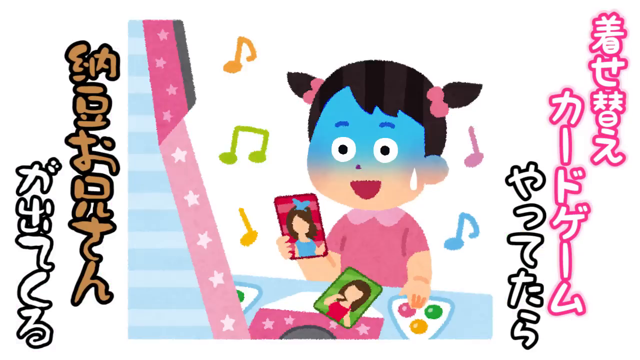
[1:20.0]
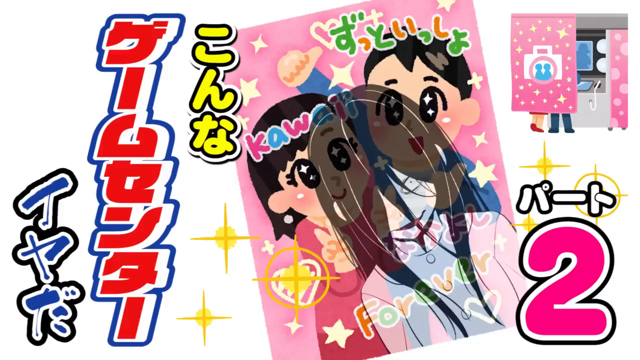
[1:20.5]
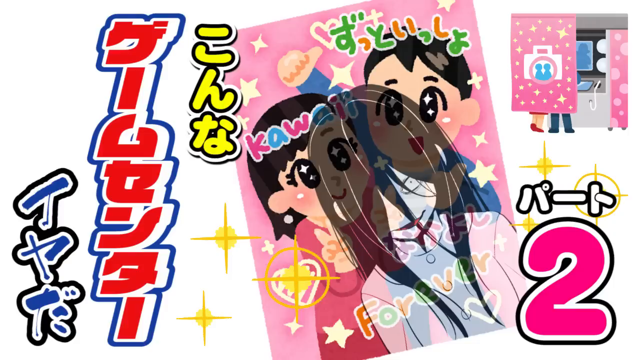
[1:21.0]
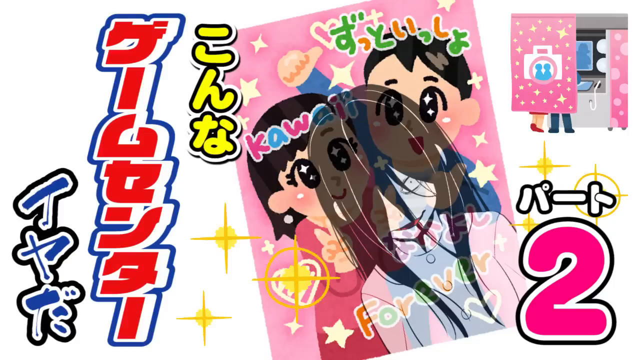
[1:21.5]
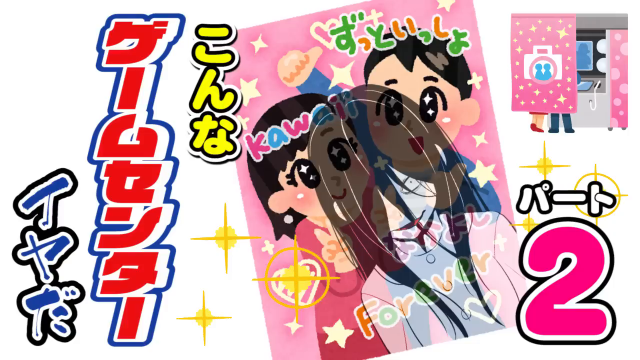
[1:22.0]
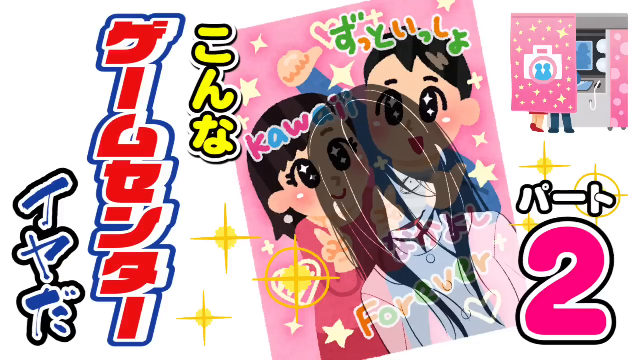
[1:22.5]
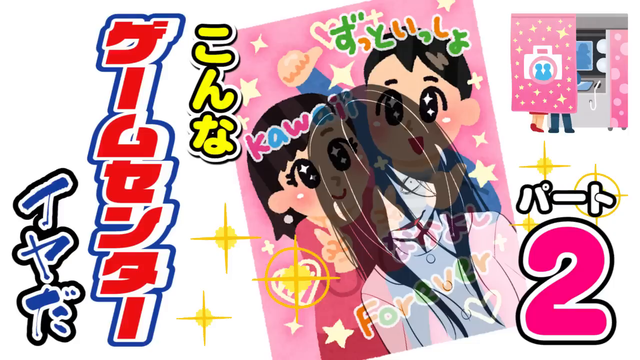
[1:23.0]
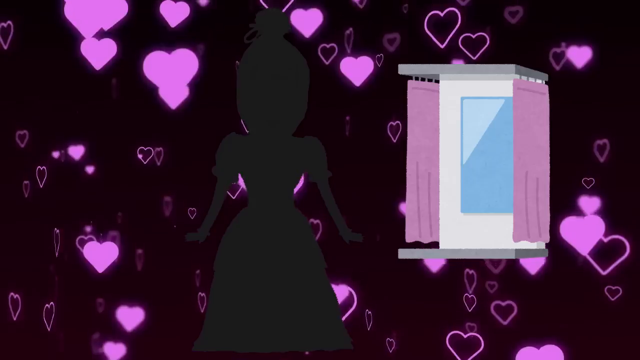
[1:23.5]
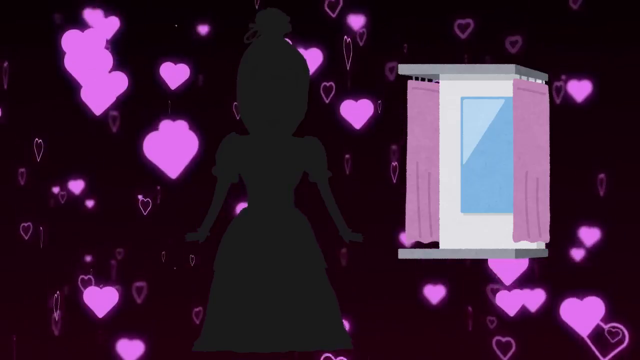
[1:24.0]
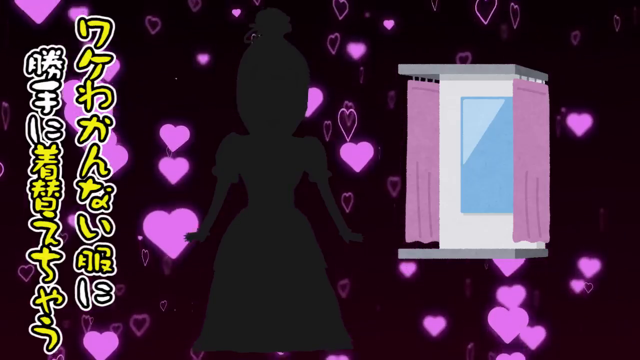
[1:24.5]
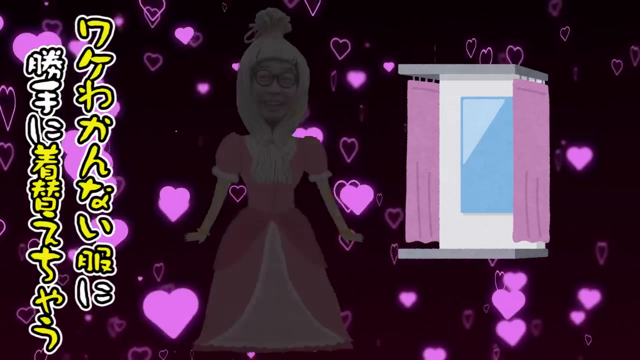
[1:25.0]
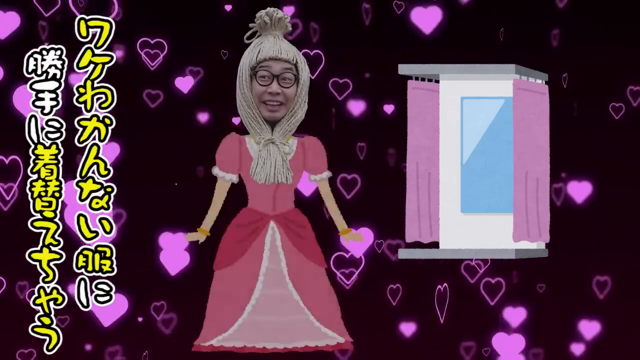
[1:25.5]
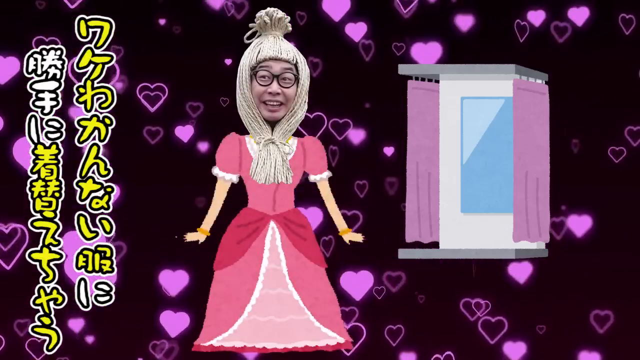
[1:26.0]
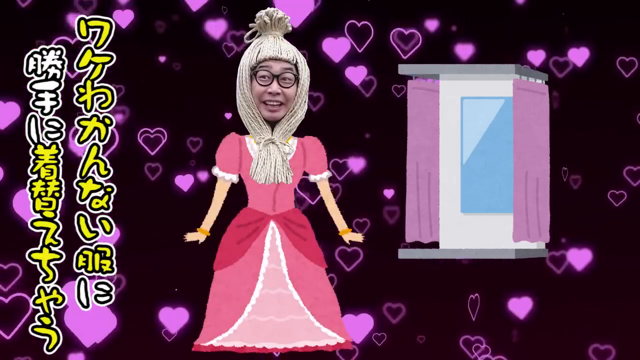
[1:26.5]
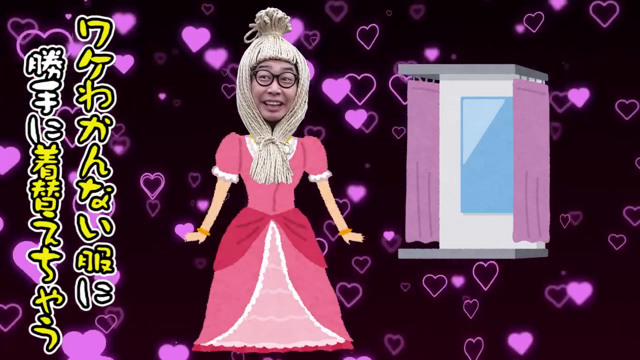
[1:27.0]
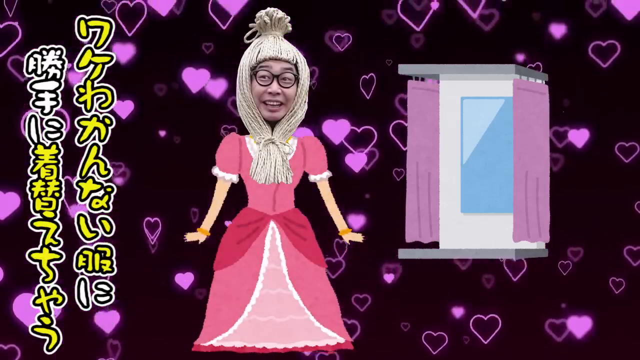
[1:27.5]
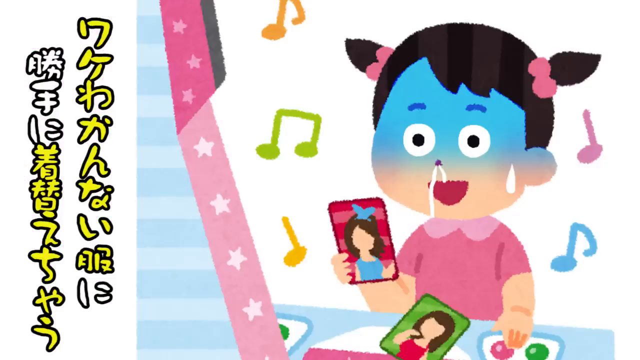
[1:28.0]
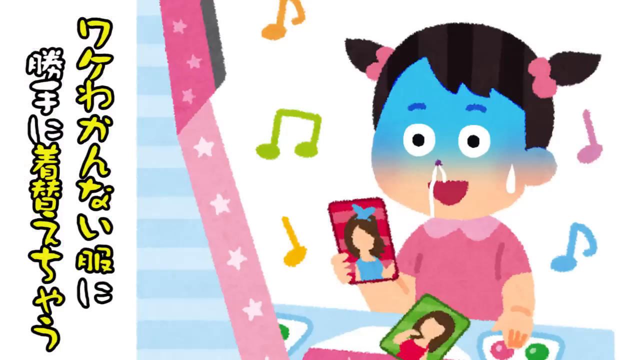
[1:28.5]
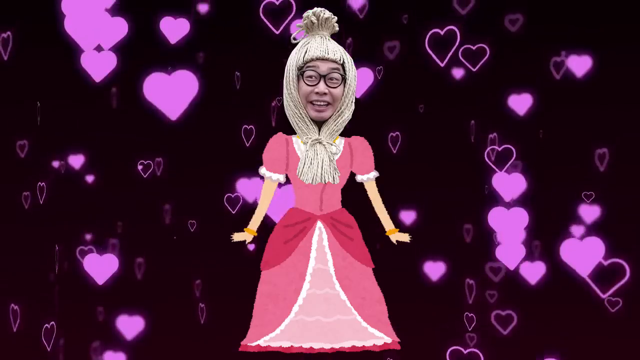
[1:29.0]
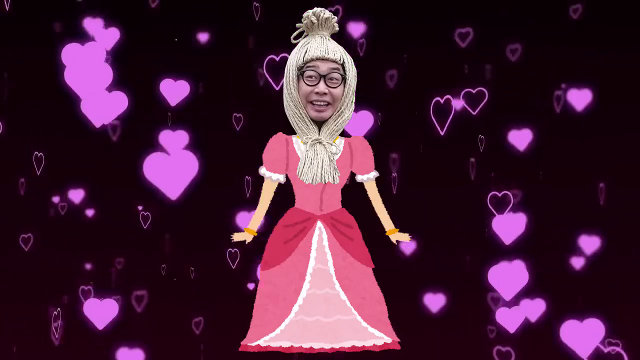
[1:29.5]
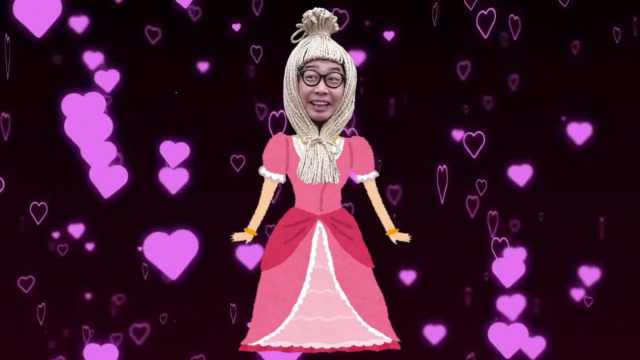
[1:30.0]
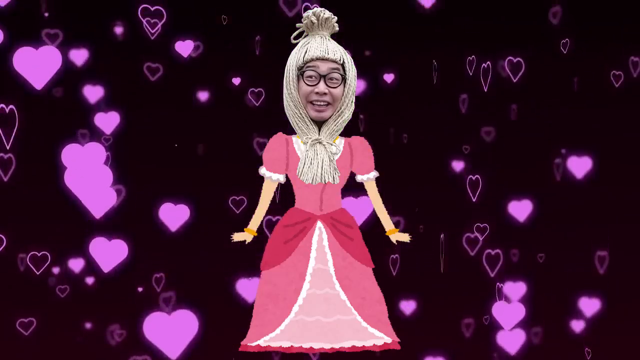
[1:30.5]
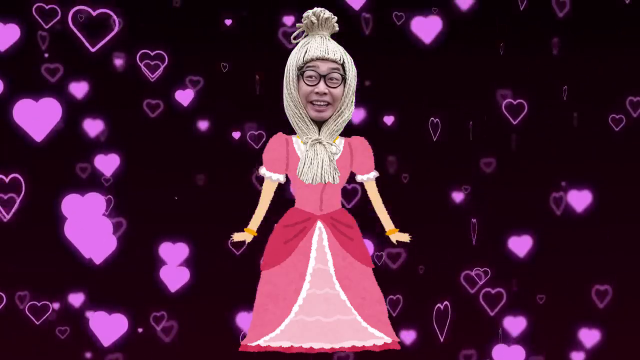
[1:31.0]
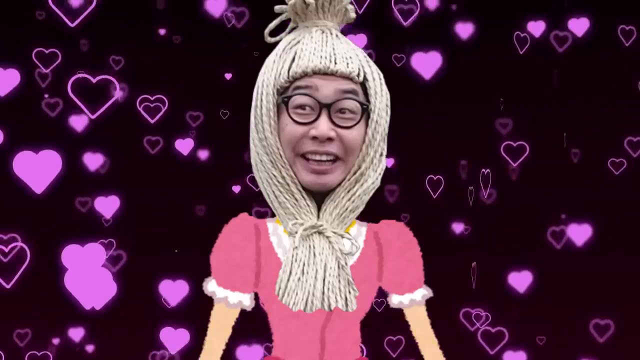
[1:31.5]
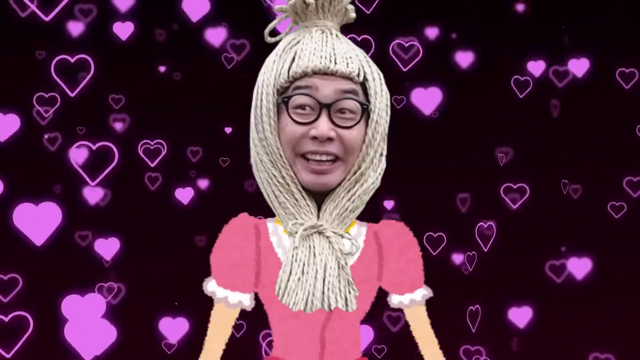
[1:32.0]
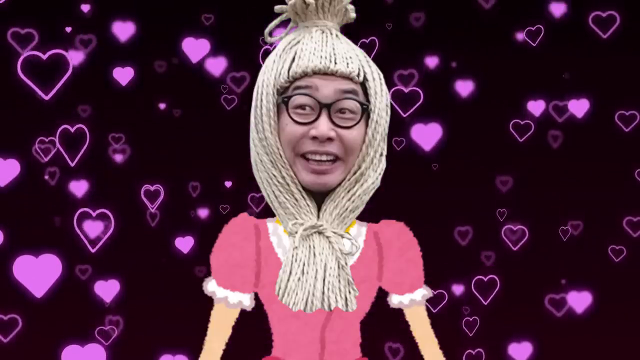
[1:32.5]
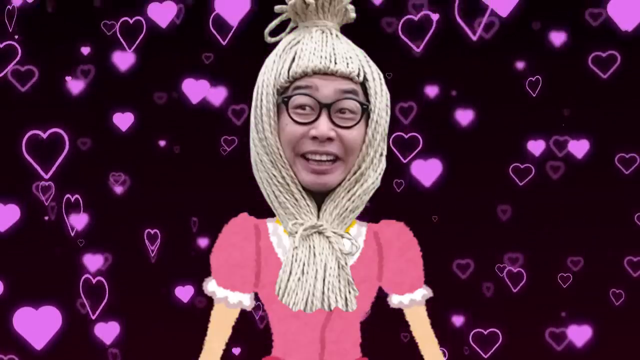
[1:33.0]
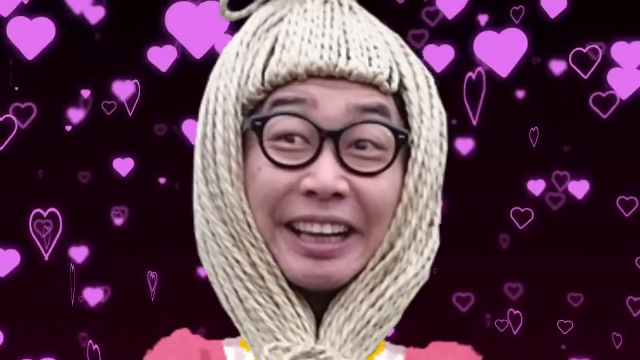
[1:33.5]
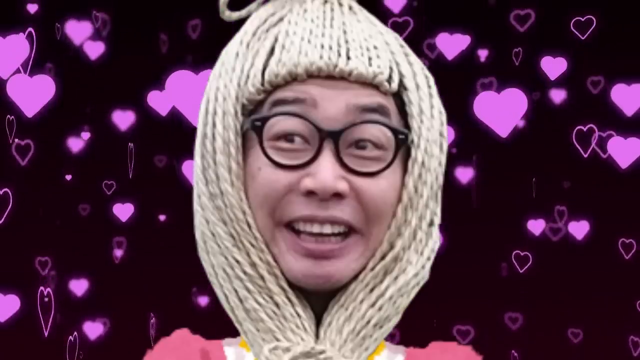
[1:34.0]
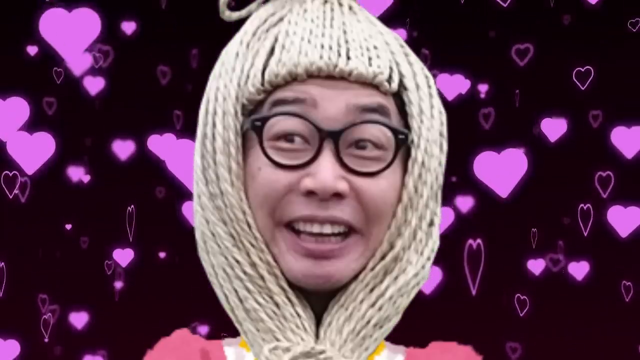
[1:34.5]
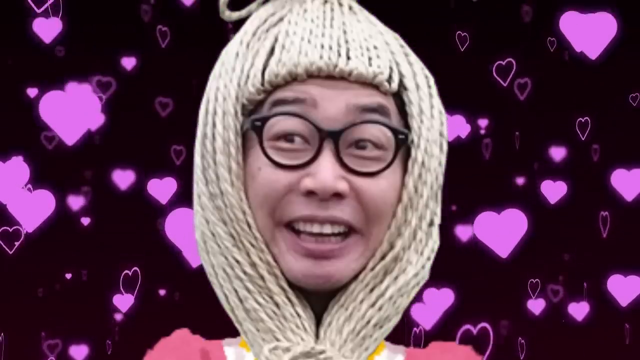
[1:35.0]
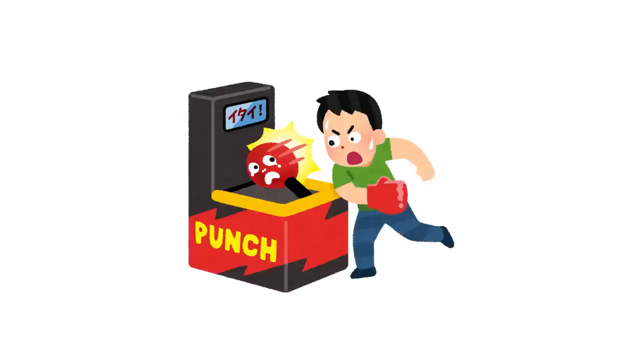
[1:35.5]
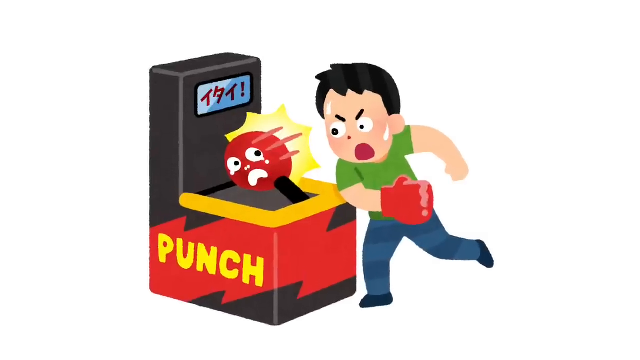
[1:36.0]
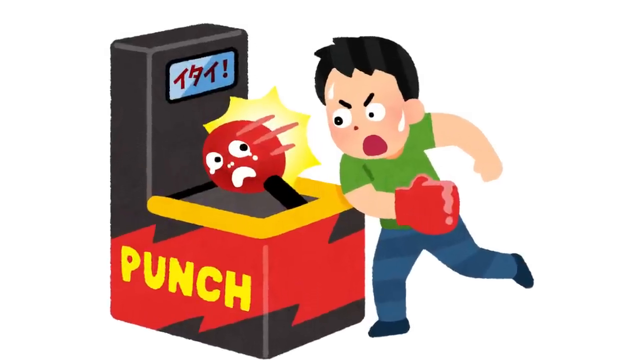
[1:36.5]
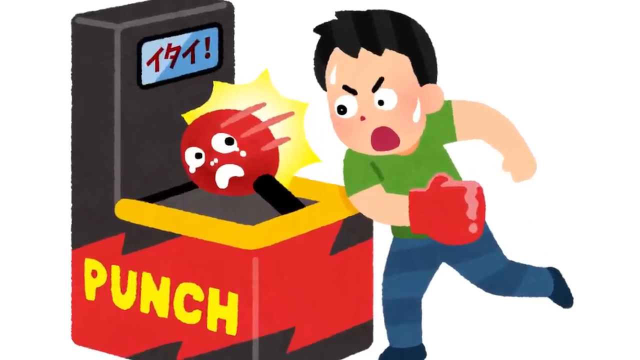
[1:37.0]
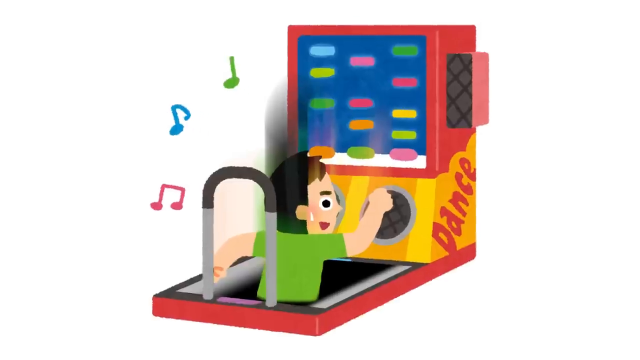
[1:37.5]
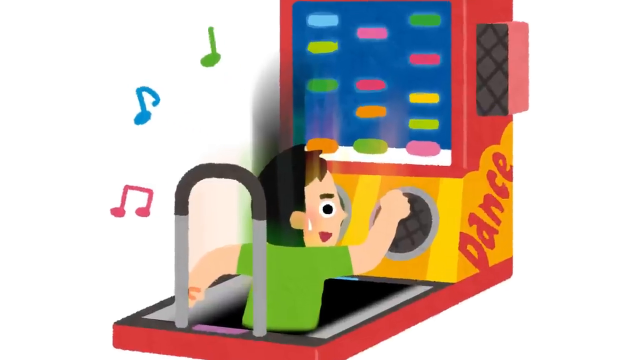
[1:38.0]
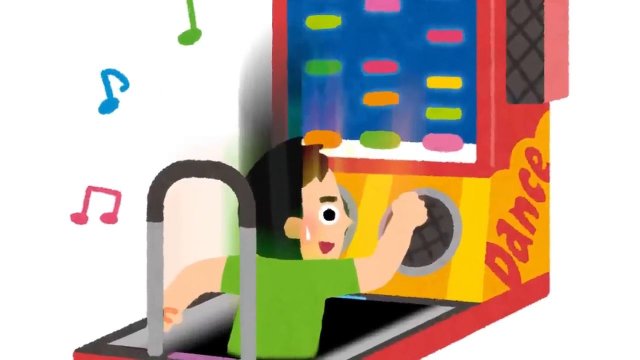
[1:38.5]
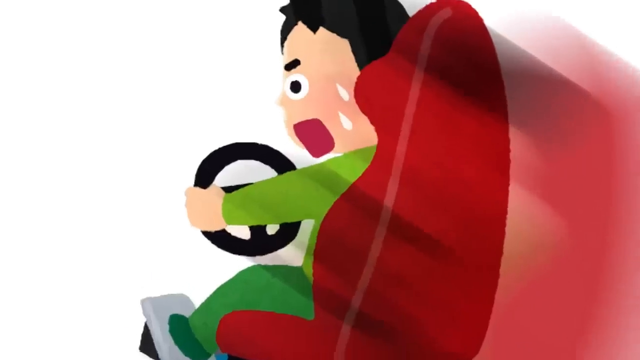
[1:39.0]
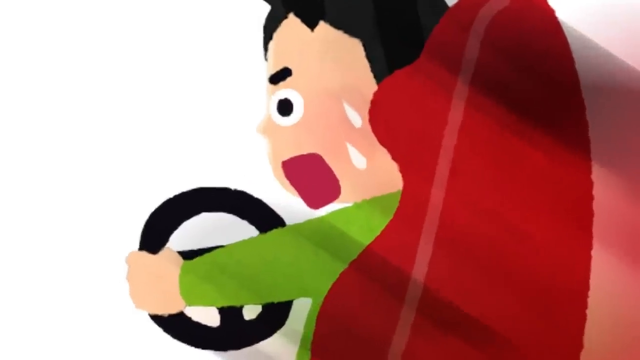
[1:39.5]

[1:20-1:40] The same pink poster of the two people appears with the scary woman now in front of it and the big pink two in the lower right-hand corner. It cuts to a black background with what looks to be possibly a fitting room on the right-hand side, with two purple curtains and a big blue mirror. Fuchsia hearts wink around the background along with yellow Japanese text. A drawing of a pink dress follows: a puffy bodice with short sleeves trimmed in white and a princess skirt in light and dark pink with lace trim. A Japanese man with big round glasses has a mop made of yarn photoshopped on top of his head, apparently meant to be a bad wig, with a tuft at the top and another tuft tied underneath his chin. The cartoon figure stands with its arms out to the side, wearing gold bracelets, while fuchsia hearts, some solid and some outlines, twinkle down in the background. The view zooms in on his big open-mouthed smile, thick black eyebrows and thick plastic round glasses. Then the man in a green T-shirt and blue jeans is seen again playing the punching bag game and the Dance Dance Revolution game, then playing the driving game. At the end the little girl looks stressed out: her face is blue, her nose is running, and she appears nervous.